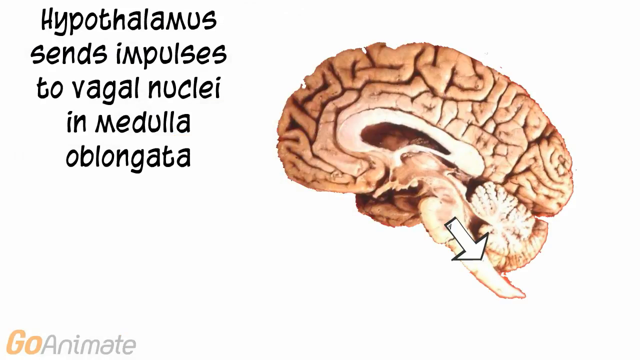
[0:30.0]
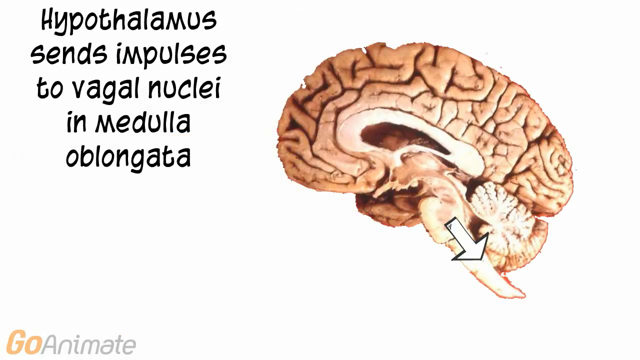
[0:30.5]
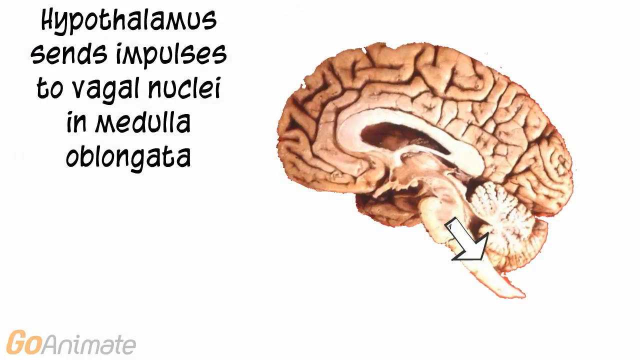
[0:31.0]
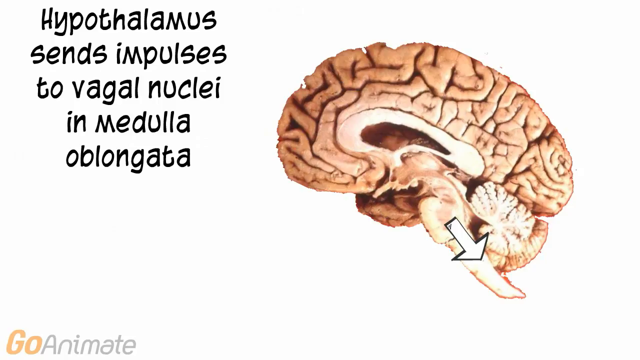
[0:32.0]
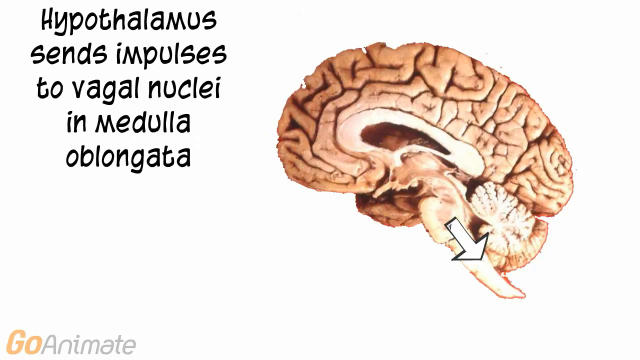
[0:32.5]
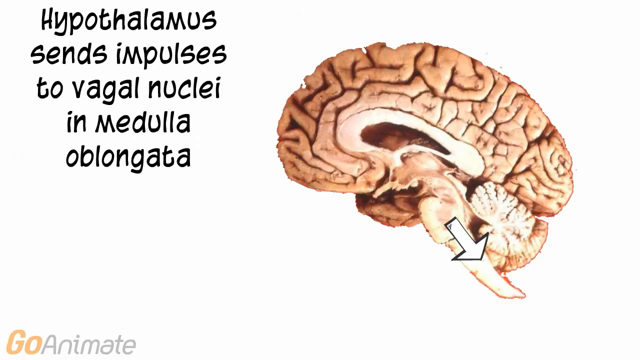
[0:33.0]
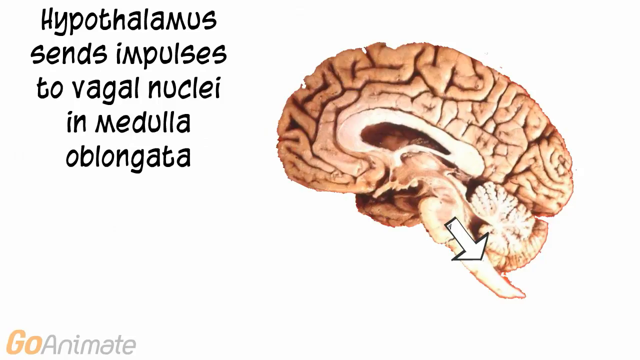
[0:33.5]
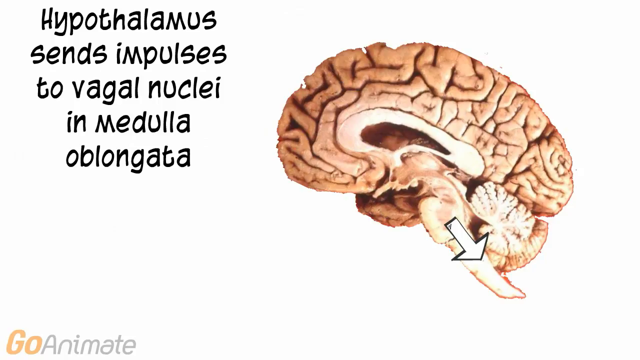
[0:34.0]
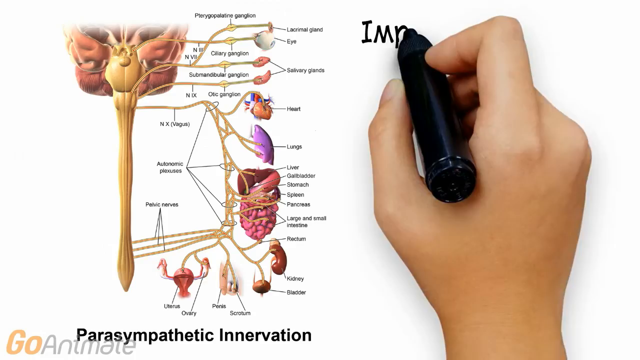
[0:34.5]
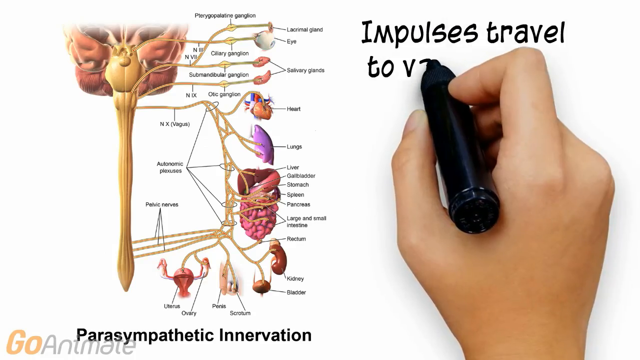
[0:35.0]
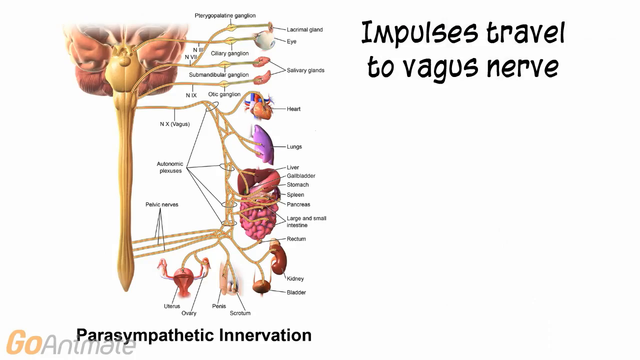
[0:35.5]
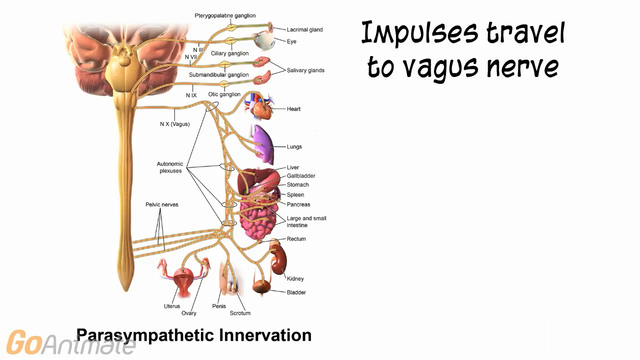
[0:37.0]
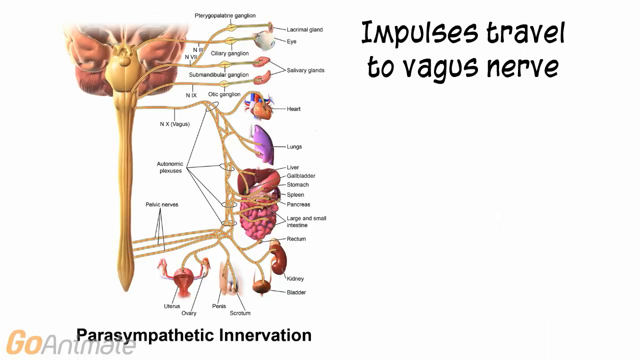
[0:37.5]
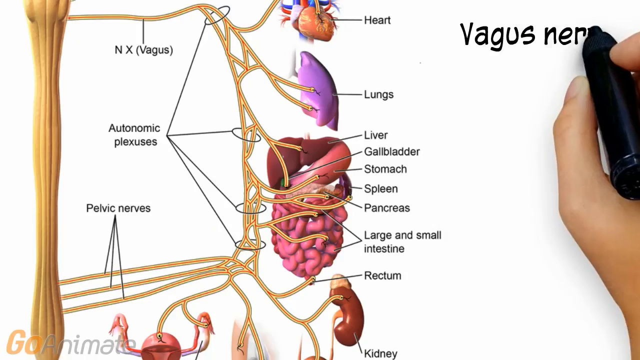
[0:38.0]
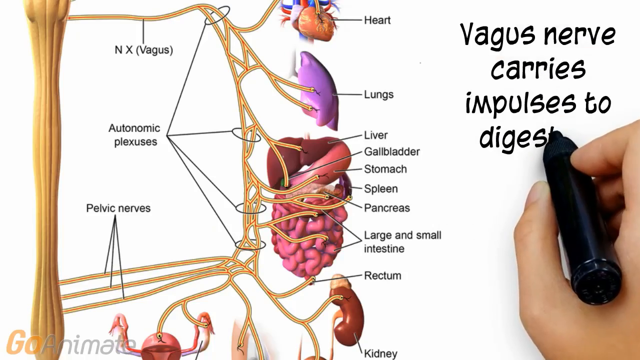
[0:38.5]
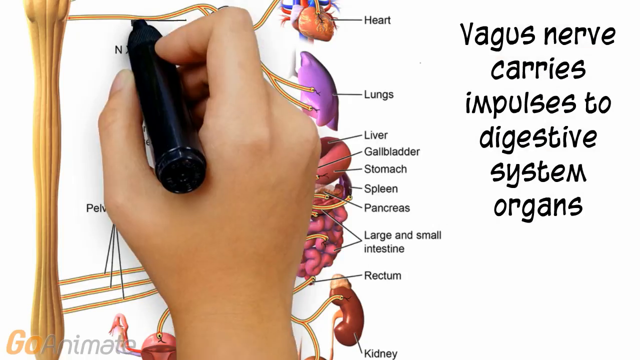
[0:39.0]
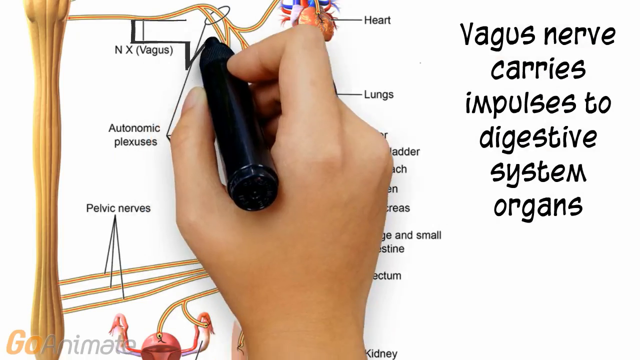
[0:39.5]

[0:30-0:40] The image of the brain is still shown, with text reading "impulses to vagal nuclei in medulla oblongata." It then transitions to the next slide, where "impulses travel to vagus nerve" is written, alongside a complete, detailed graph and image of the inside of the body and the digestive system, showing the lungs, the stomach and other air-related areas, all labeled and pictured. The view then zooms in a bit, and "vagus nerve carries impulses to the digestive organs" is written.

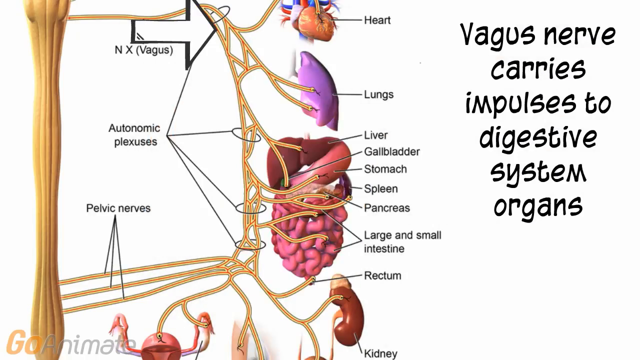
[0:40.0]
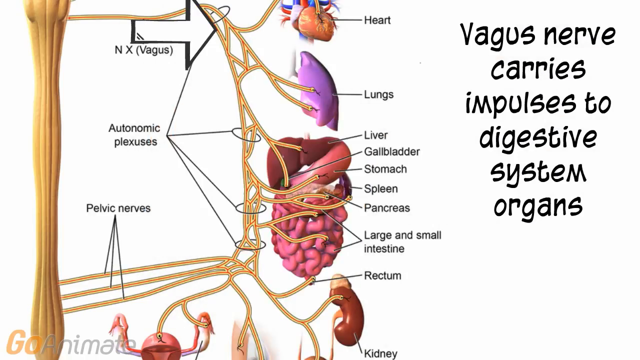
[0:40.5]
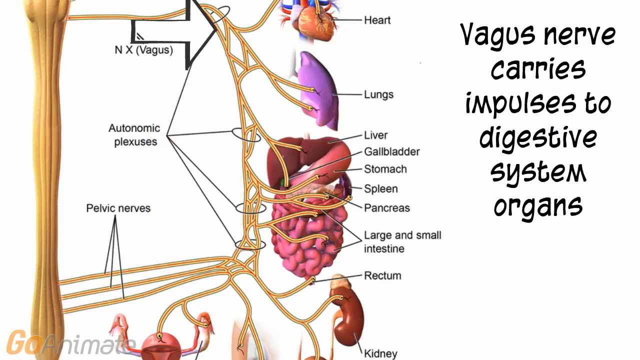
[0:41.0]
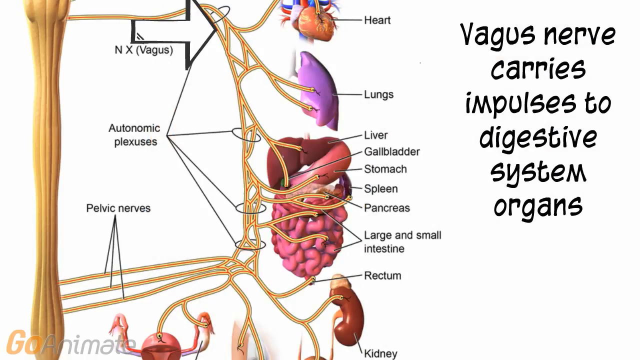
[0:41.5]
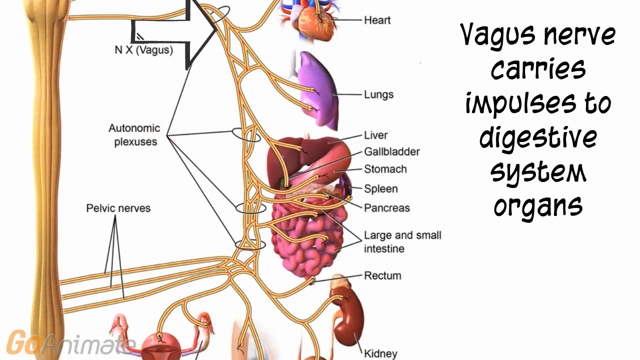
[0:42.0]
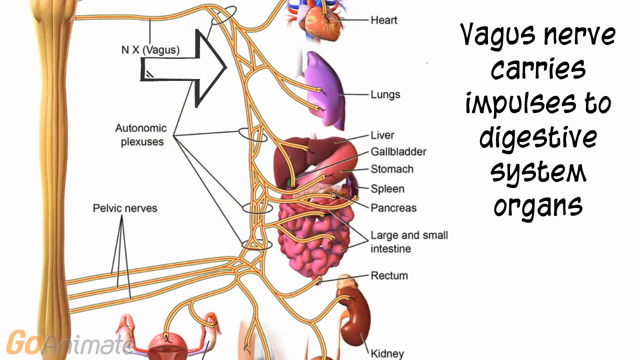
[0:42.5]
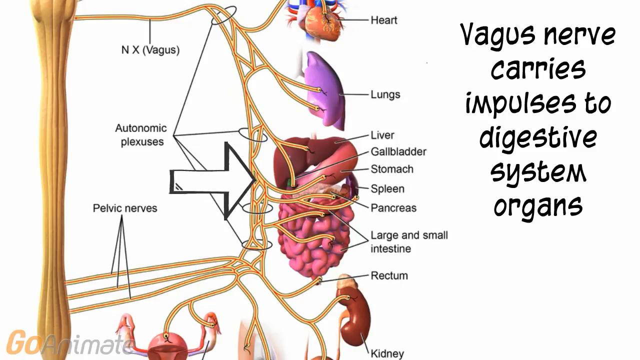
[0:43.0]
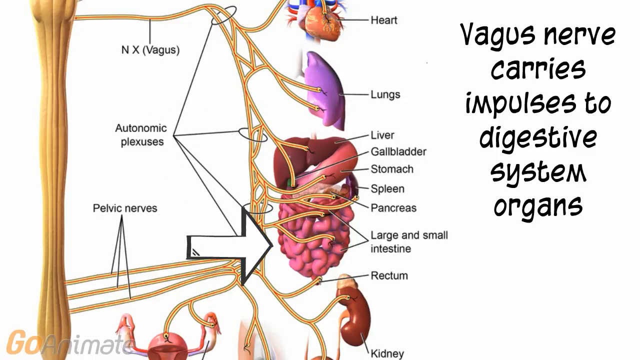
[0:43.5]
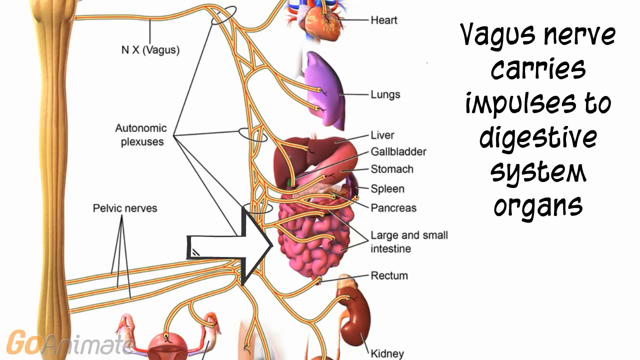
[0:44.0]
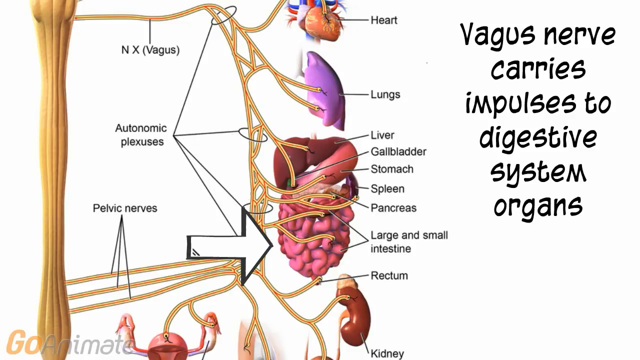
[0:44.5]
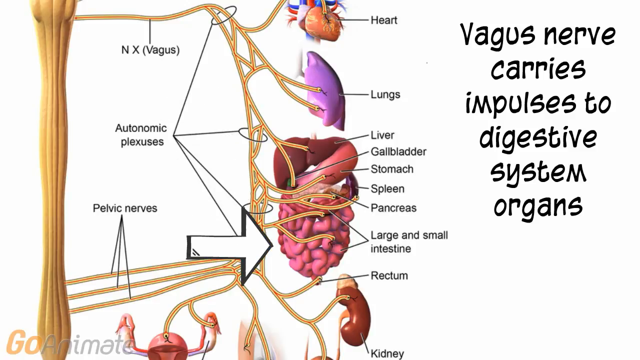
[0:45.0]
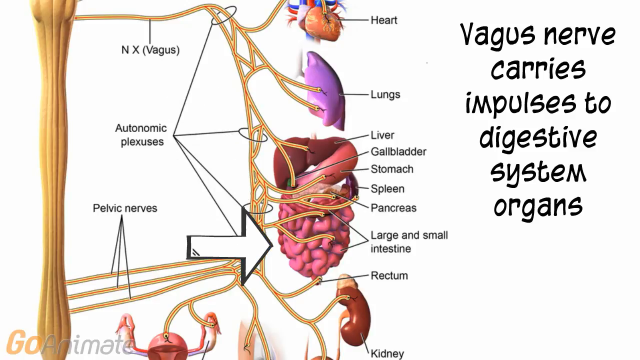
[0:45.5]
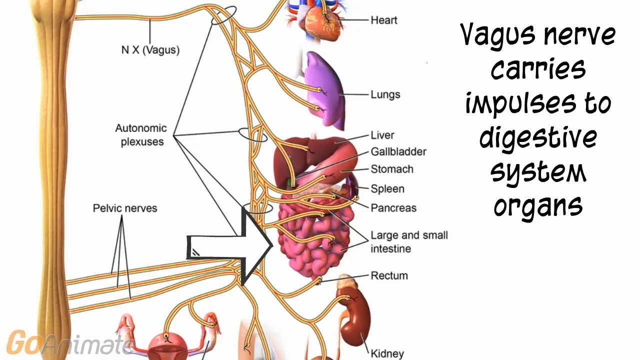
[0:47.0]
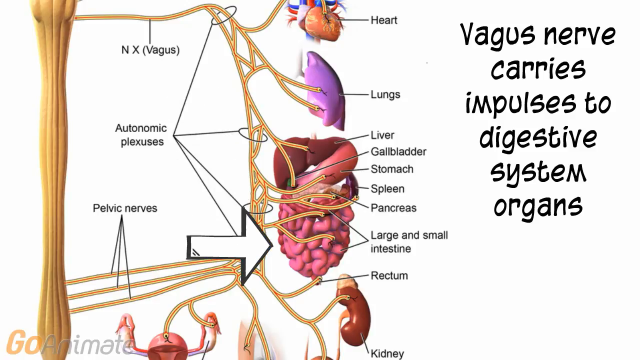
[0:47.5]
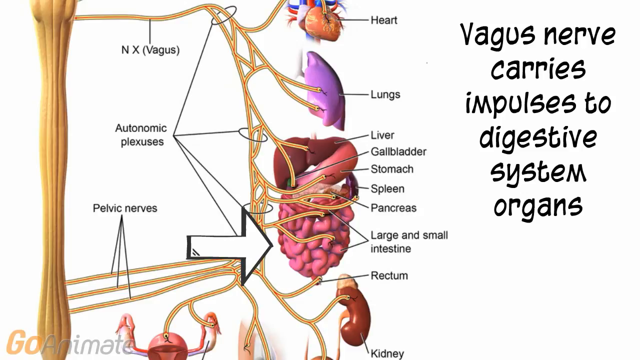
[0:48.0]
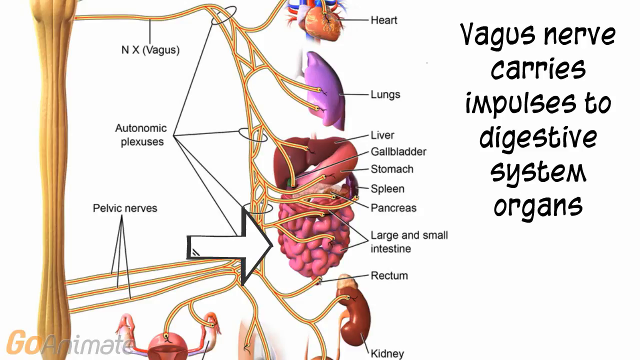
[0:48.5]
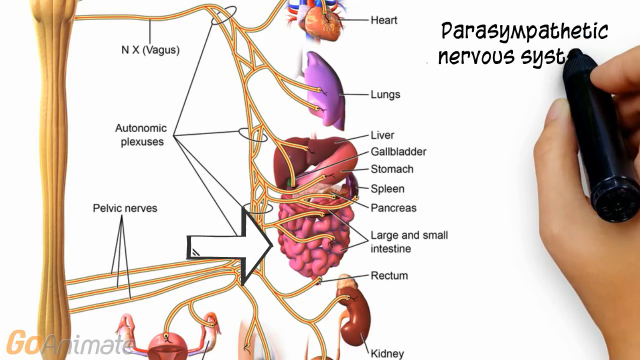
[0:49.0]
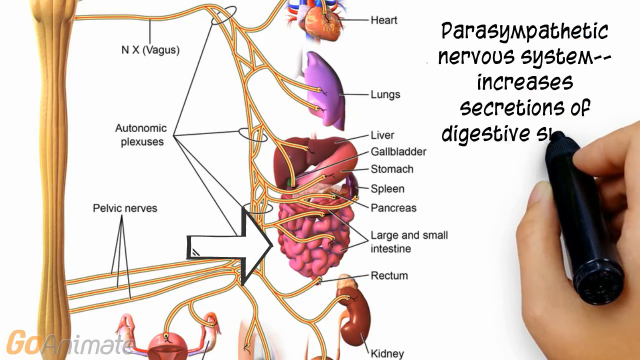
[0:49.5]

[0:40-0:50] The same zoomed-in screen remains, showing a detailed image and graph of body parts, all labeled and pictured, including the heart, the lungs, the liver and related areas. To the side is written "vagus nerve carries impulses to digestive system organs." An arrow then points and moves close to the large and small intestine, pointing to that area. Briefly, "parasympathetic nervous system increases secretions of digestive system" is also written on the screen.